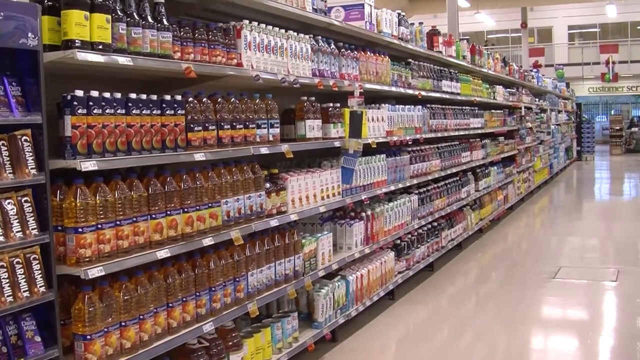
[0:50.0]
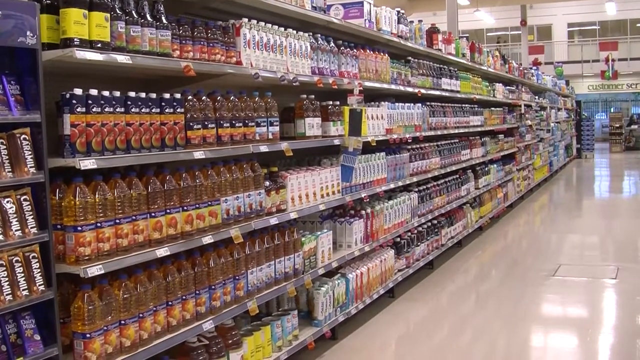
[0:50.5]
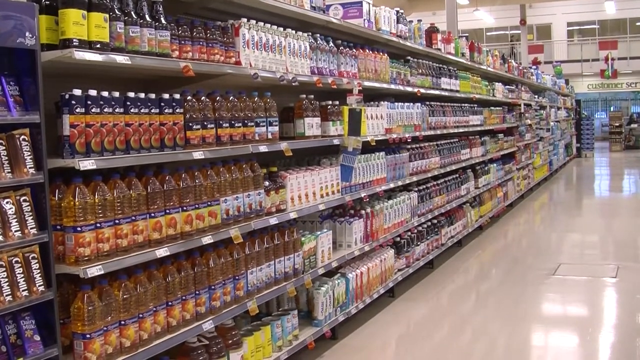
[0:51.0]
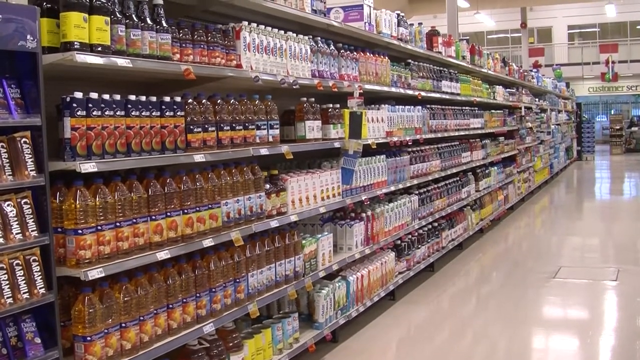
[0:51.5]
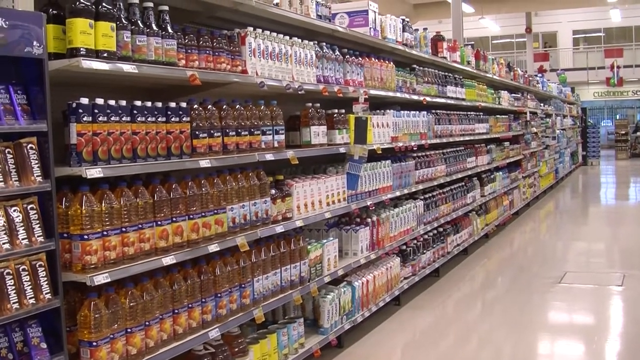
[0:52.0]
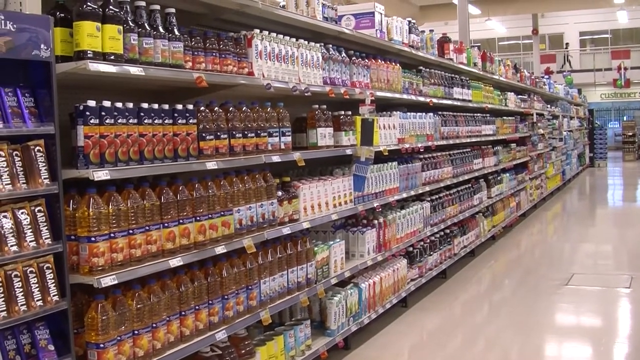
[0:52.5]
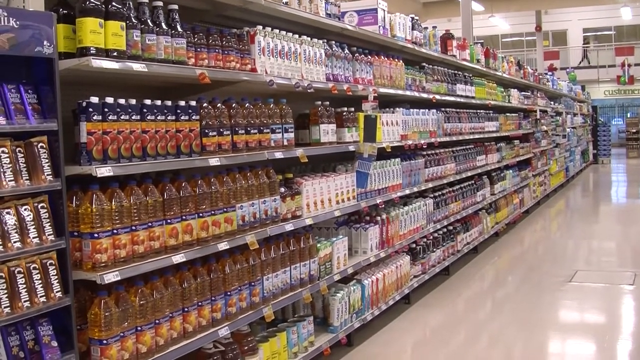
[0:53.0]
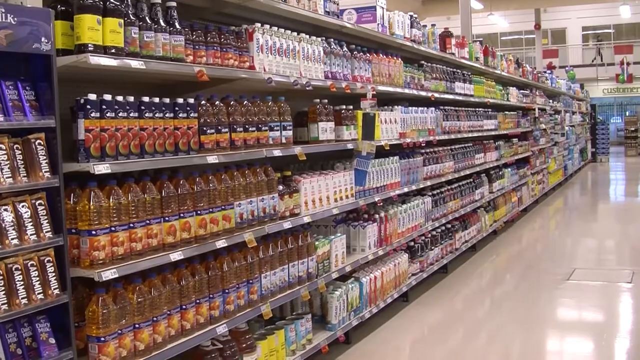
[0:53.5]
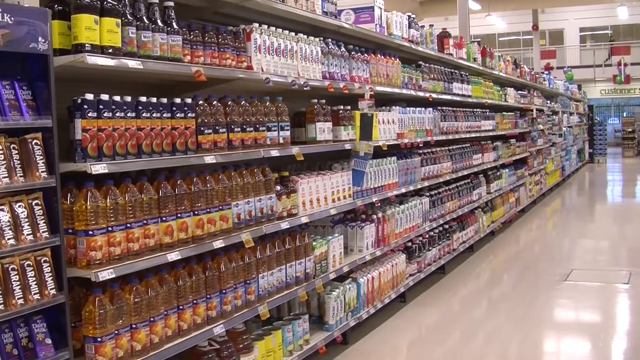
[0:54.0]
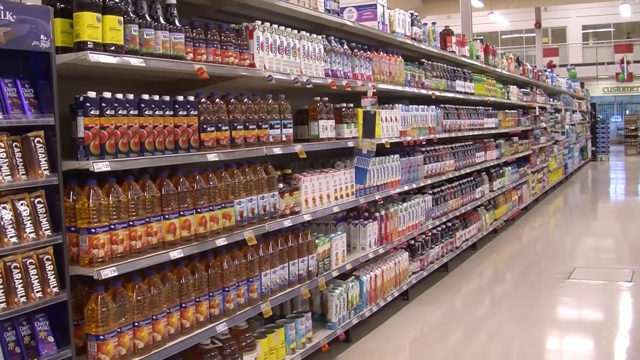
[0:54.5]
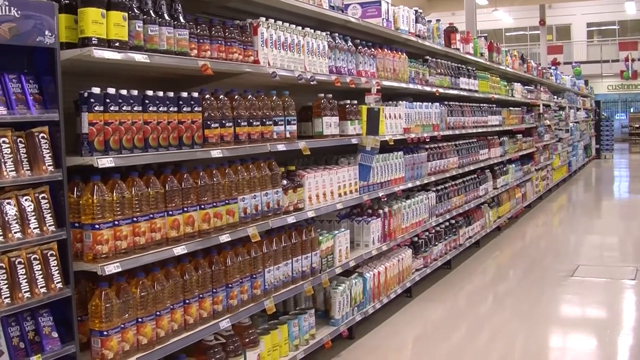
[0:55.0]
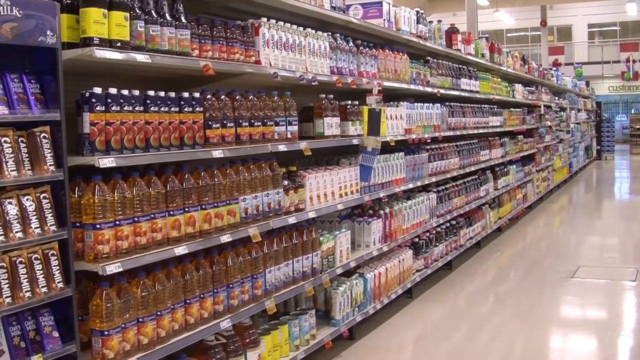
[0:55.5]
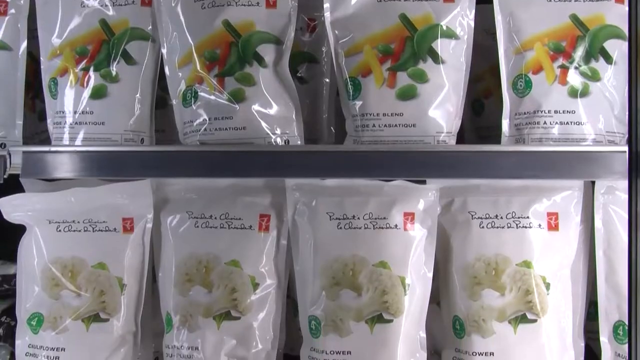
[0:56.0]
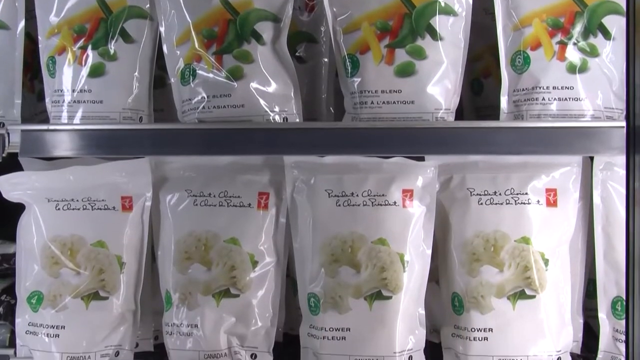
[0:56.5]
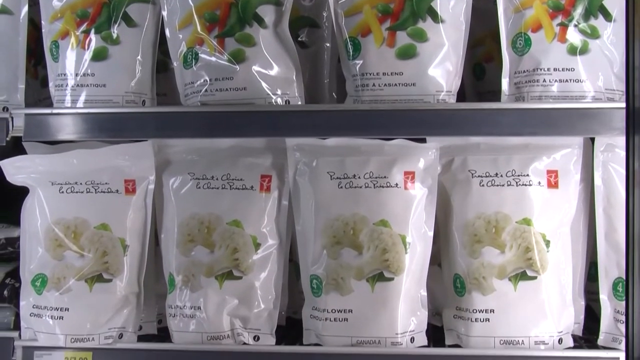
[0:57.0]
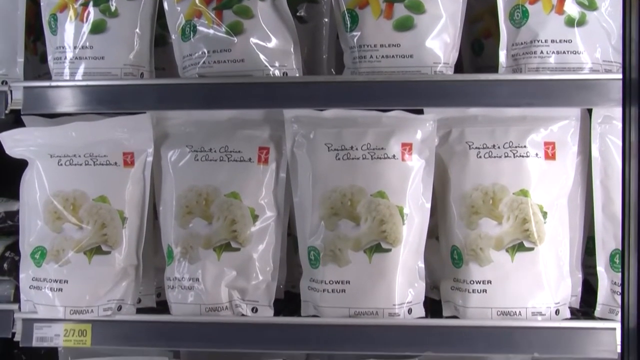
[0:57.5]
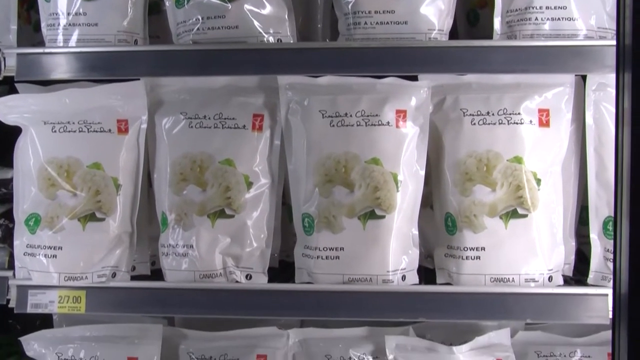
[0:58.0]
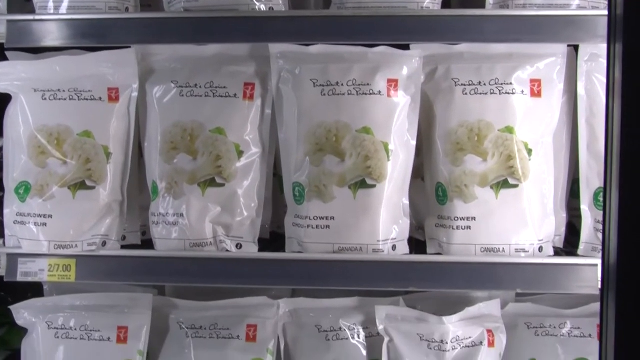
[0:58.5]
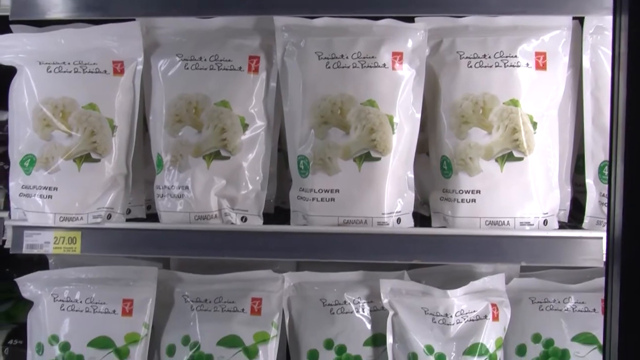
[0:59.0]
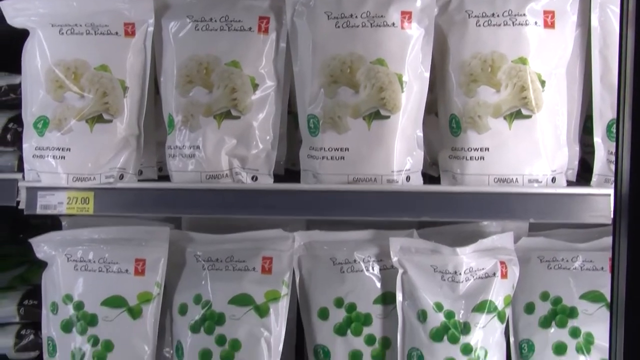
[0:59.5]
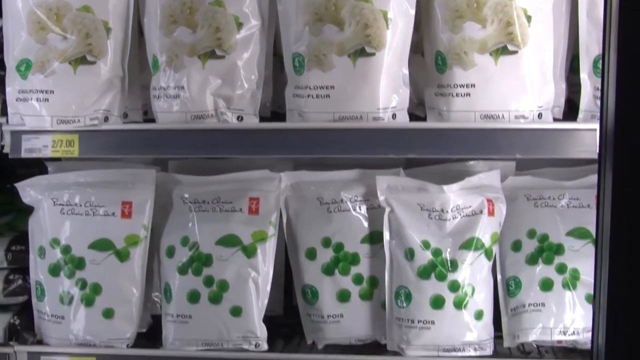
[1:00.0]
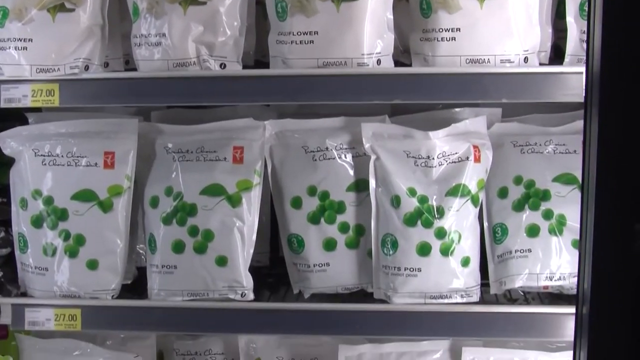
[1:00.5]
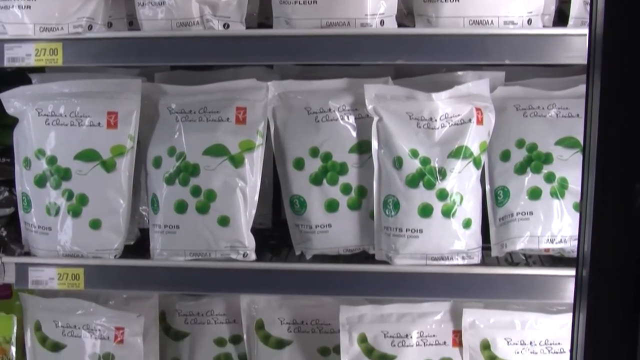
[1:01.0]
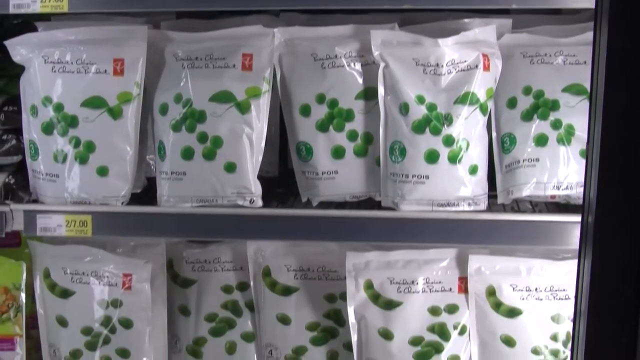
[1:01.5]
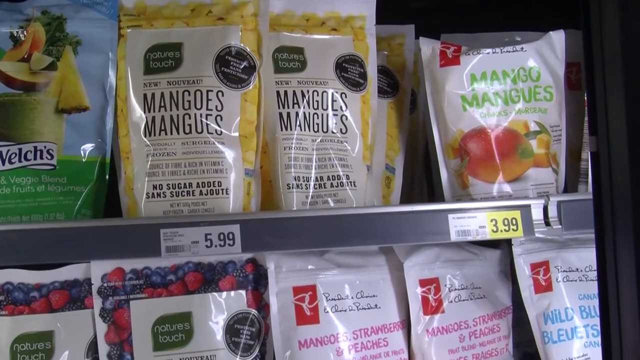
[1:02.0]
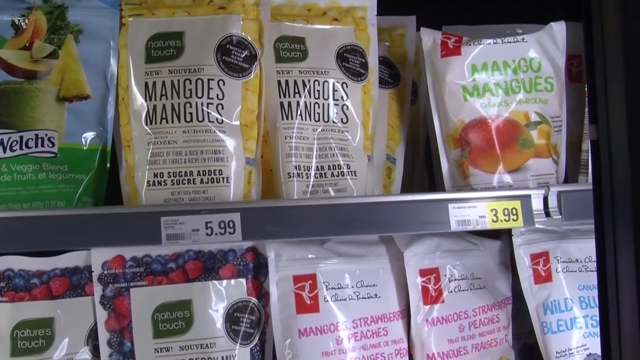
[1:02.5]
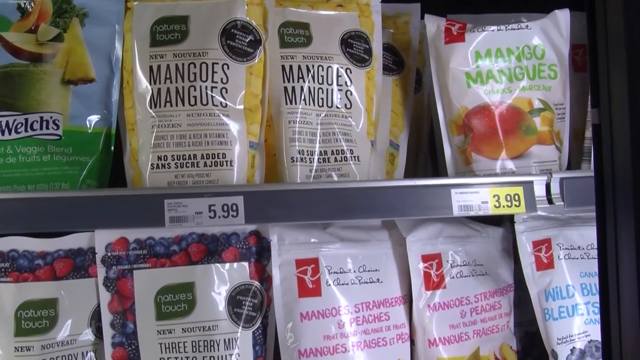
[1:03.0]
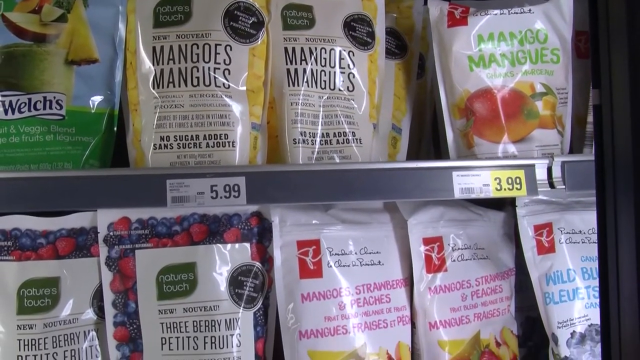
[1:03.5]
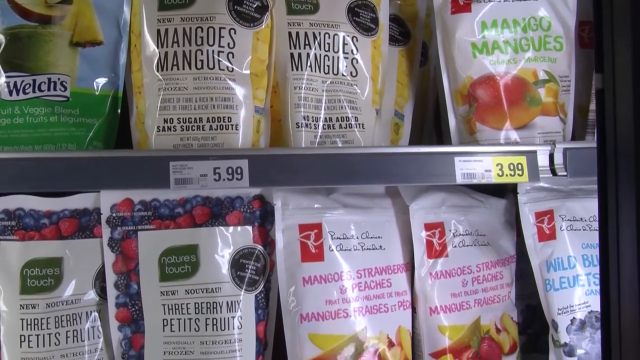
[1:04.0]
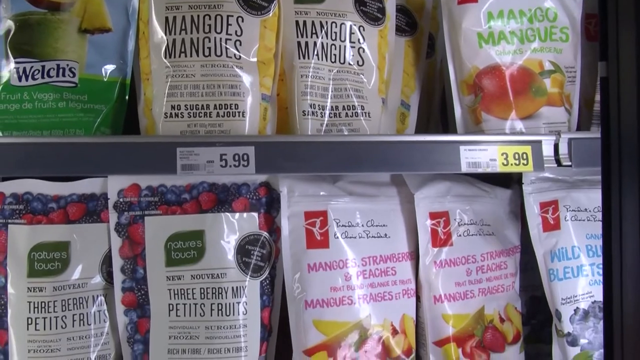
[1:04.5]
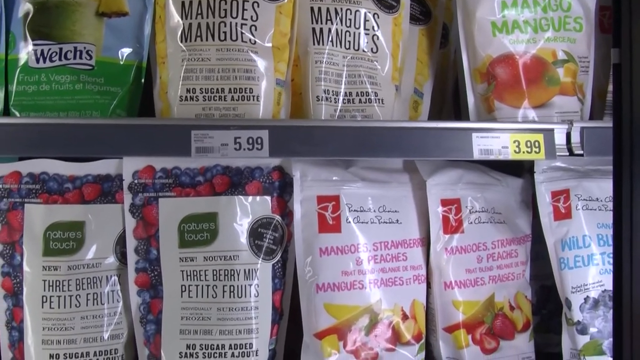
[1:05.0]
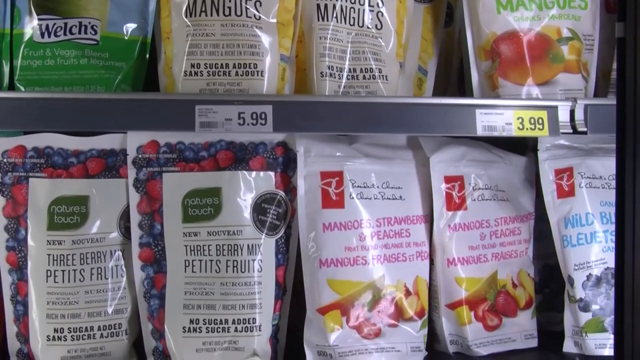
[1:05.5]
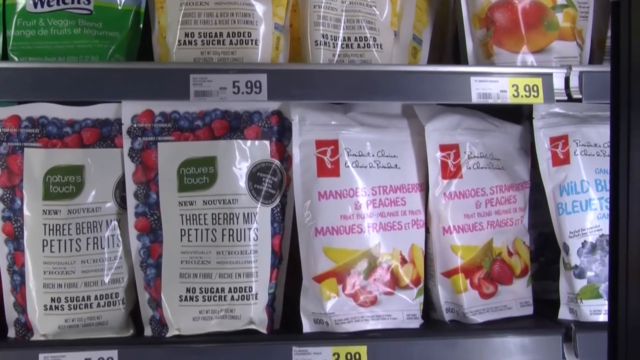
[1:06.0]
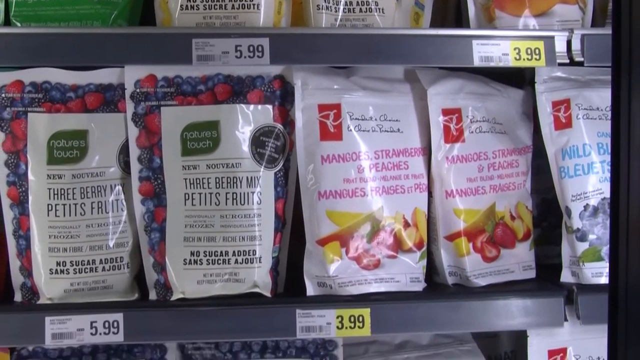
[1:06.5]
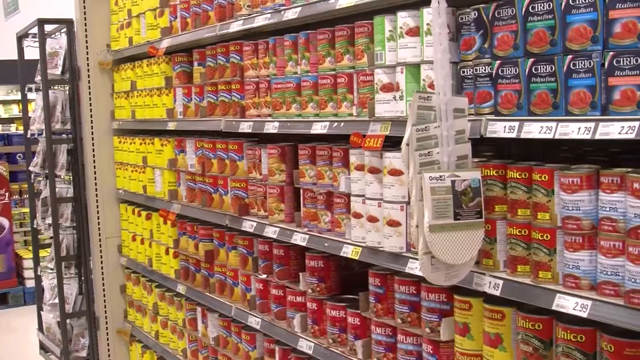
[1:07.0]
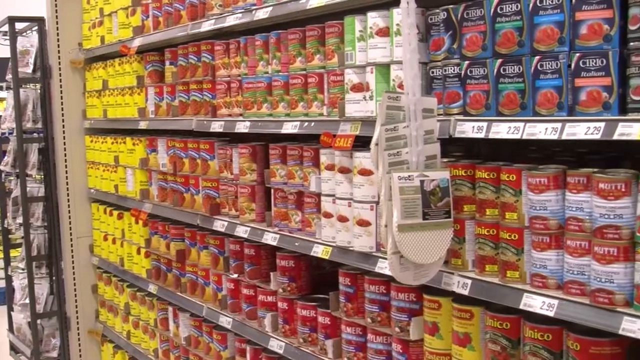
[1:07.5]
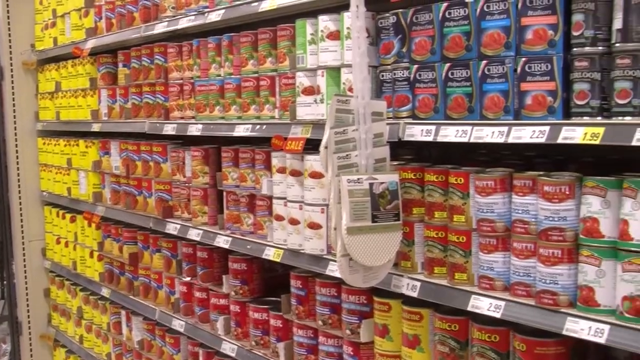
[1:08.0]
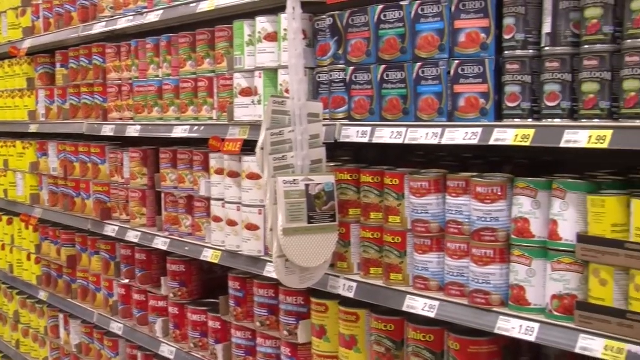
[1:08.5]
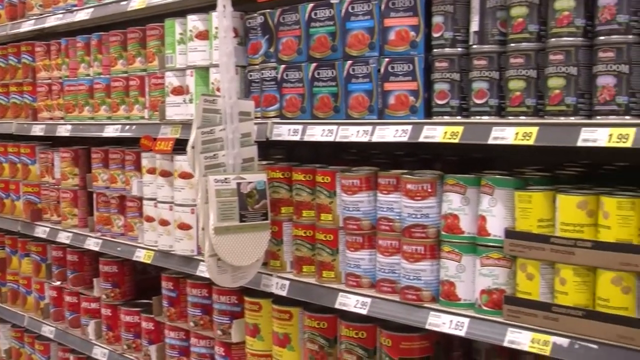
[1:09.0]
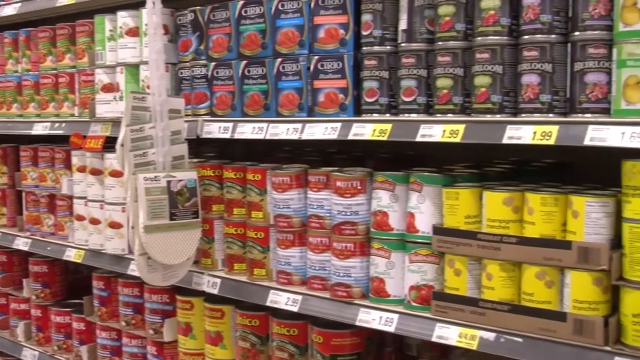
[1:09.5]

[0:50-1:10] A wide-angle shot shows a grocery store aisle with a number of drinks, different oils and items to cook with. There are chocolate bars on the left side and other cooking ingredients along the aisle. In the background there is a second story with a balcony area, where an individual walks above the far end of the aisle behind some railing. The camera lingers on the aisle briefly before the view moves to a refrigerated aisle with layers of frozen vegetables, focusing on cauliflower and peas as the camera moves down. Next is a scene of frozen fruits such as mangoes, strawberries and blueberries, and the camera pans down. Then comes an aisle of canned vegetables, apparently canned tomatoes, along with different soups; the shot starts on the left side of the aisle and slowly pans toward the right. There are a number of brands, apparently including Hunt, and the cans come in various colors such as red, blue, black and yellow. The camera pans further to the right.